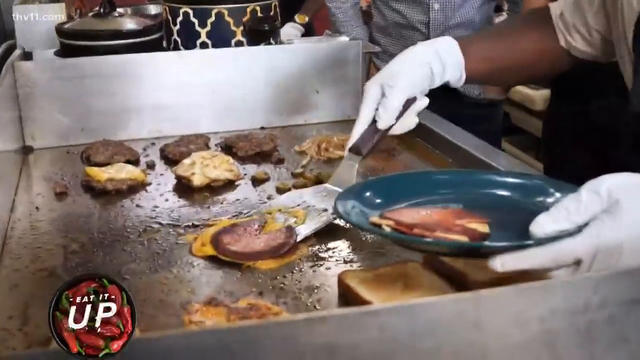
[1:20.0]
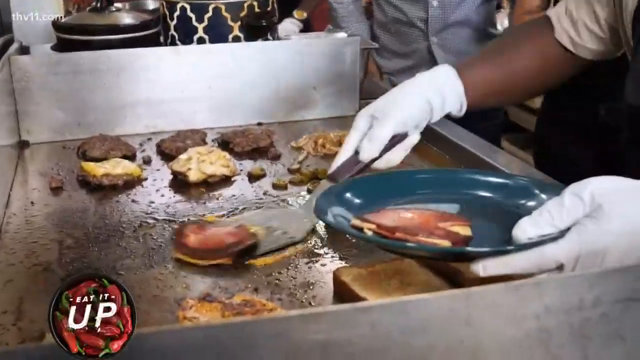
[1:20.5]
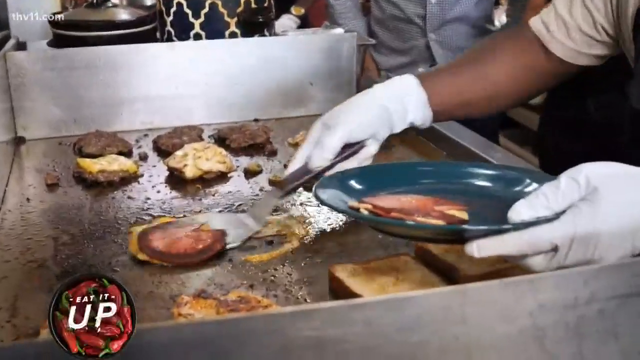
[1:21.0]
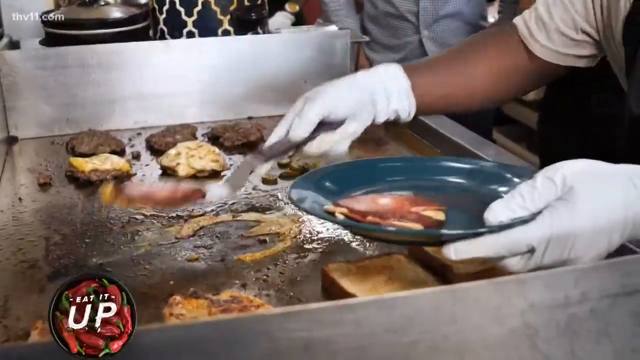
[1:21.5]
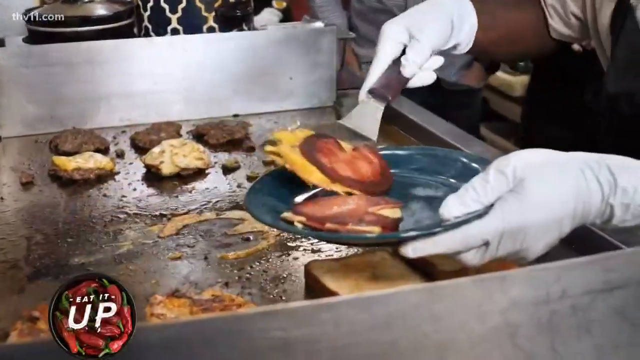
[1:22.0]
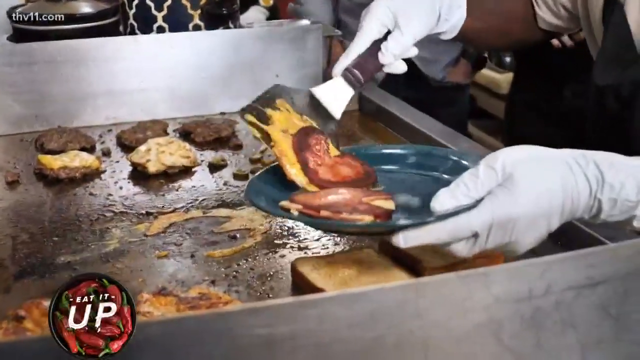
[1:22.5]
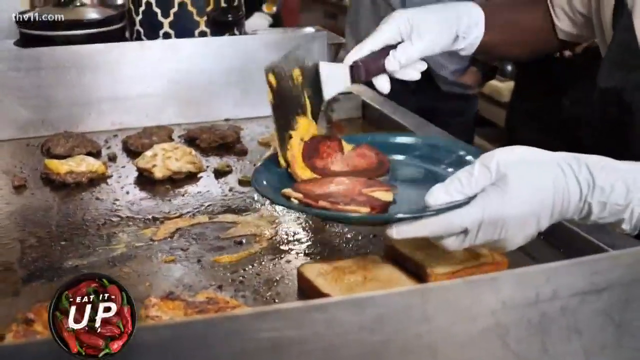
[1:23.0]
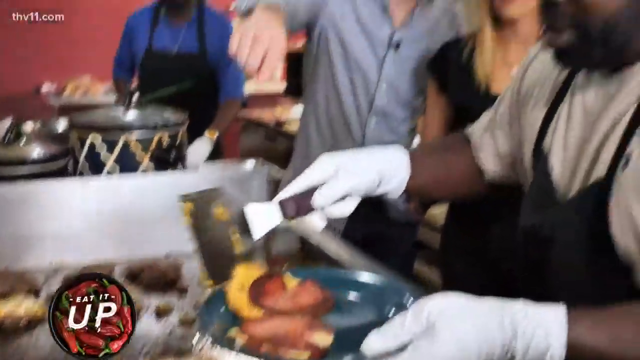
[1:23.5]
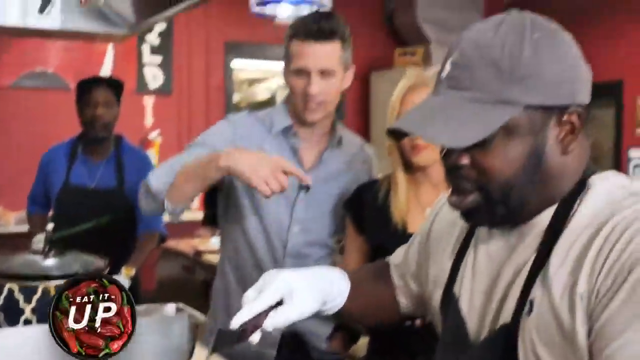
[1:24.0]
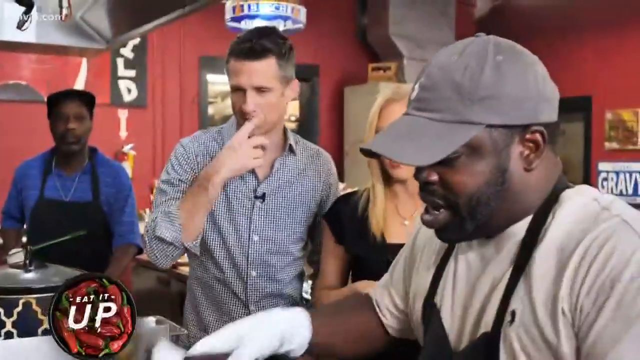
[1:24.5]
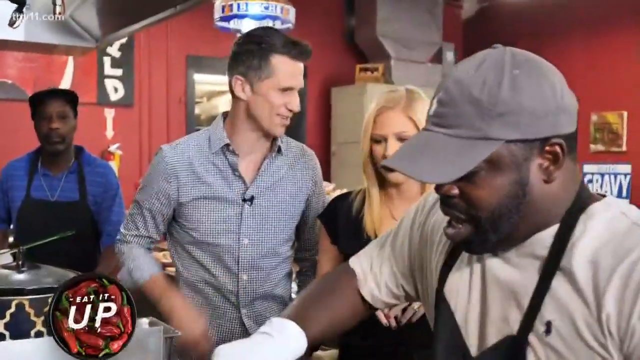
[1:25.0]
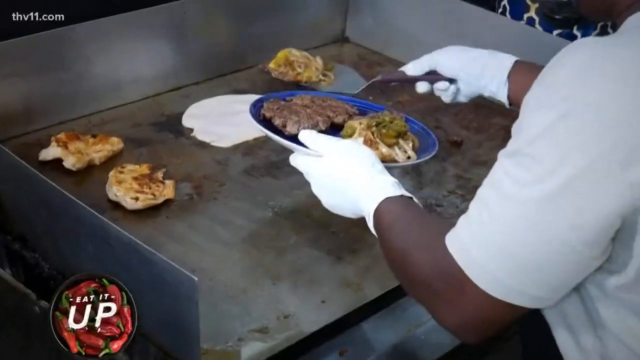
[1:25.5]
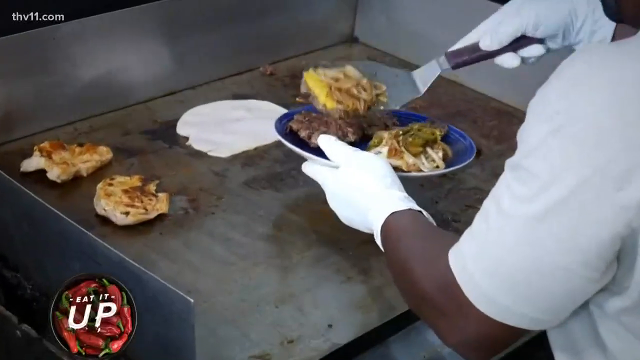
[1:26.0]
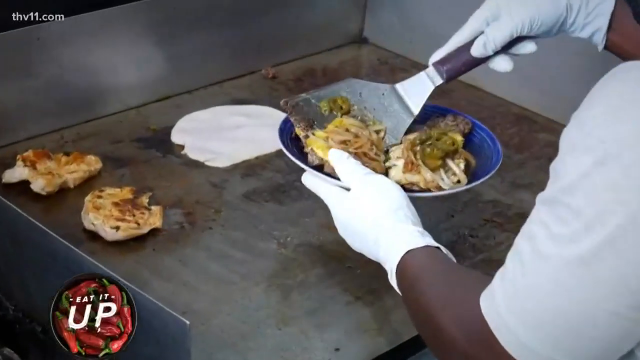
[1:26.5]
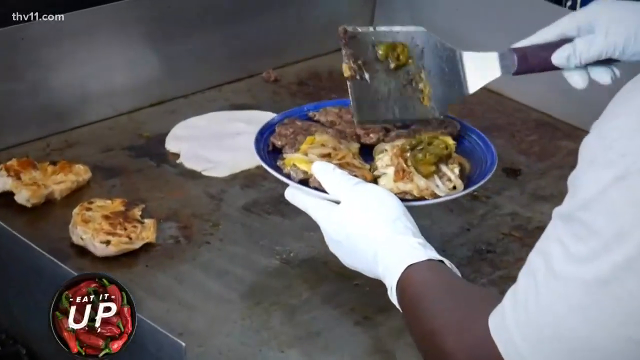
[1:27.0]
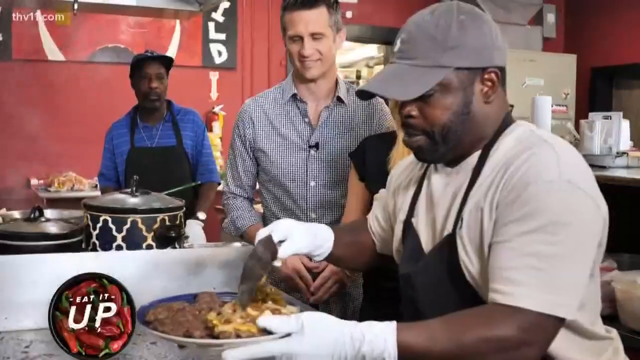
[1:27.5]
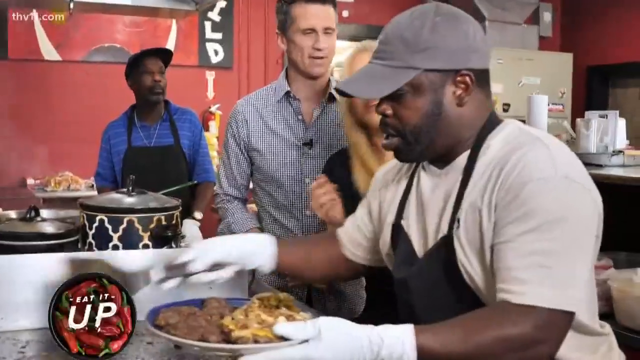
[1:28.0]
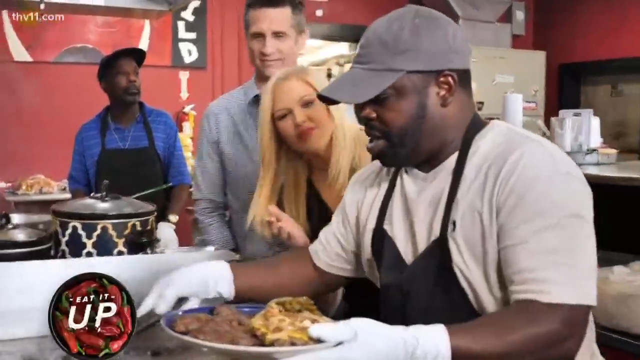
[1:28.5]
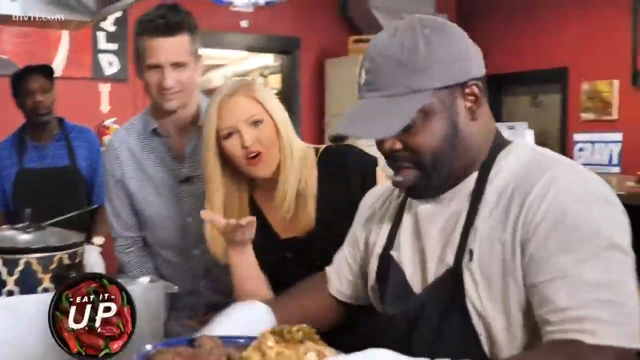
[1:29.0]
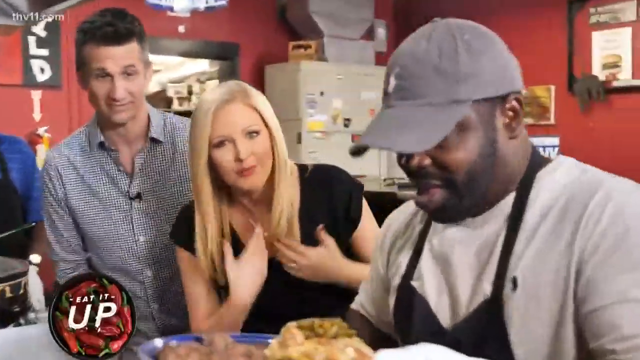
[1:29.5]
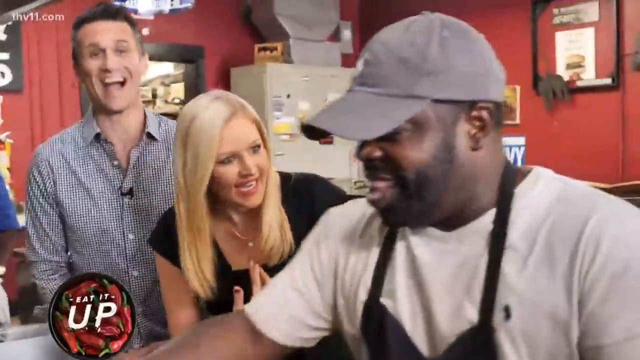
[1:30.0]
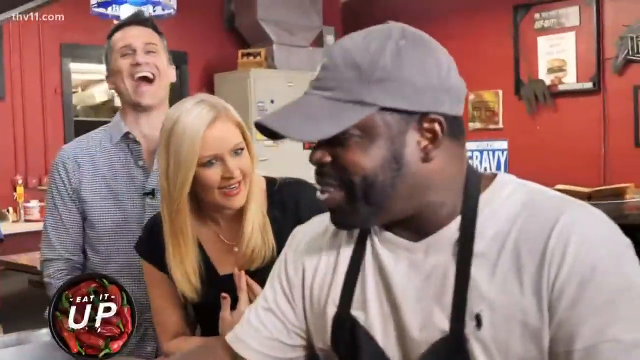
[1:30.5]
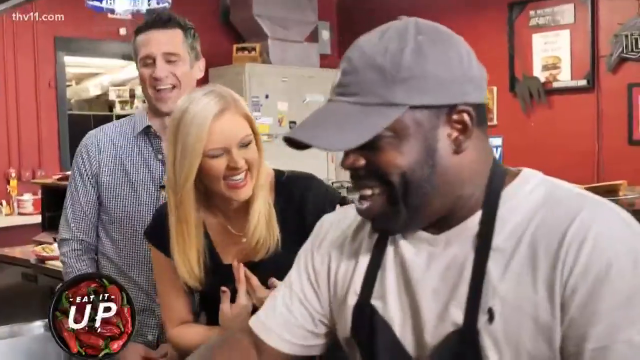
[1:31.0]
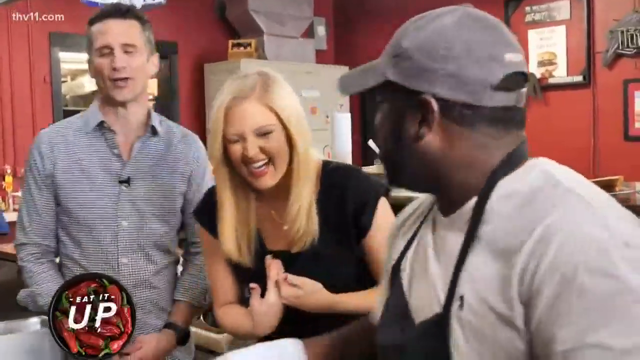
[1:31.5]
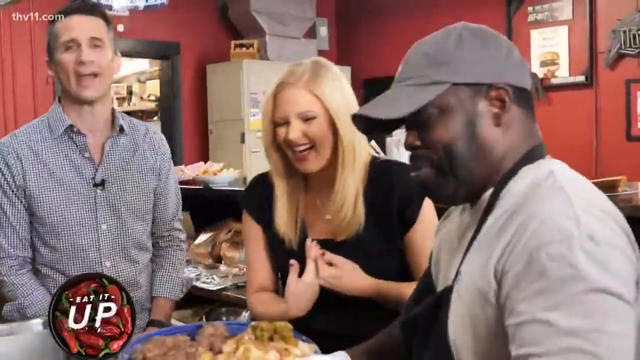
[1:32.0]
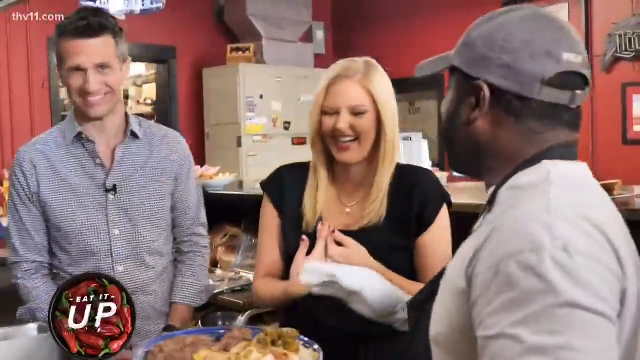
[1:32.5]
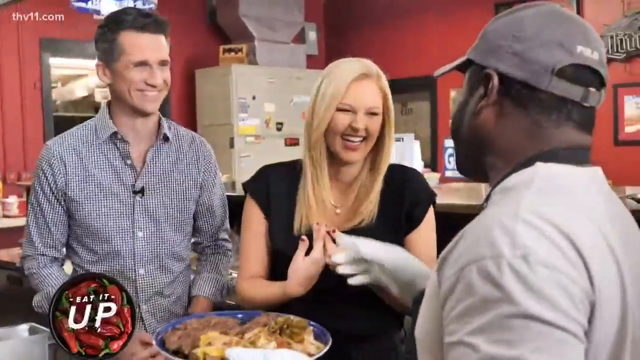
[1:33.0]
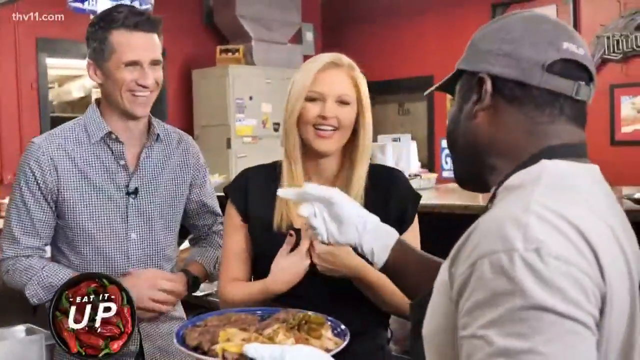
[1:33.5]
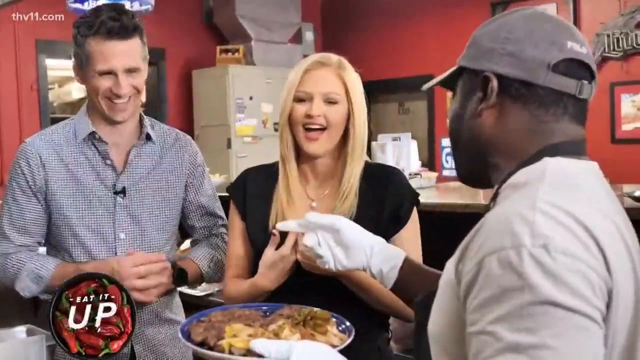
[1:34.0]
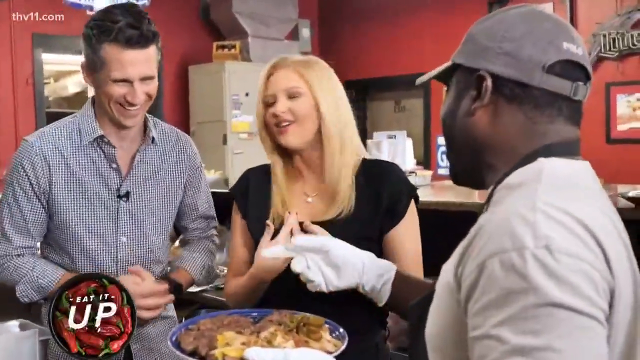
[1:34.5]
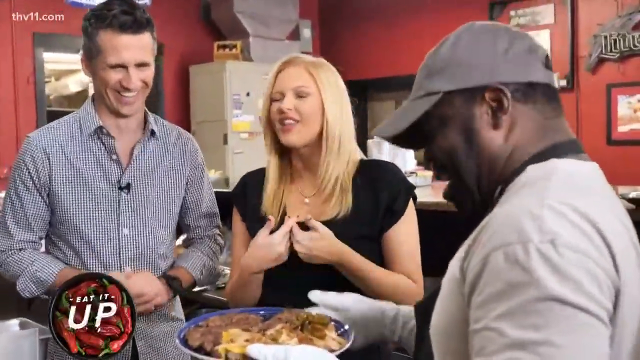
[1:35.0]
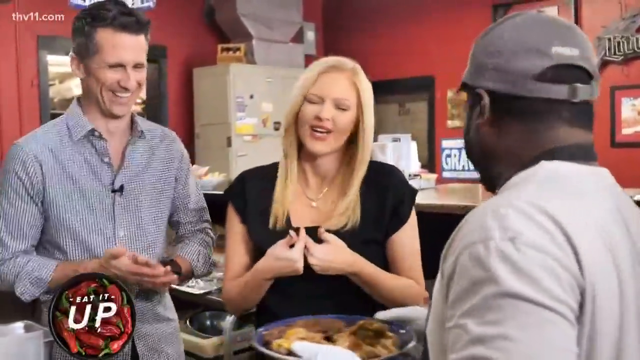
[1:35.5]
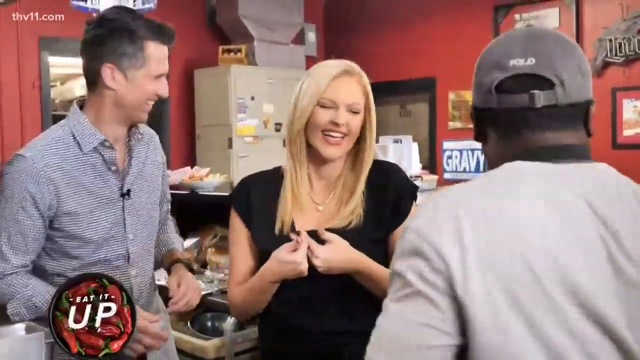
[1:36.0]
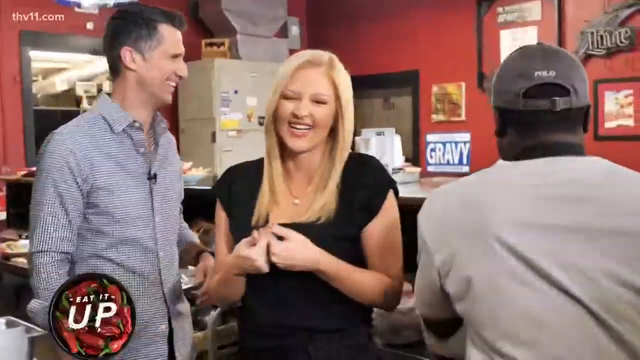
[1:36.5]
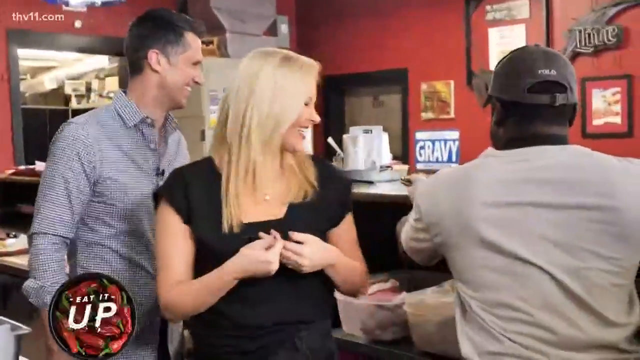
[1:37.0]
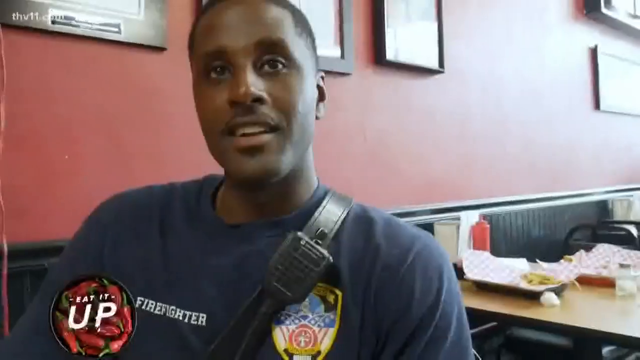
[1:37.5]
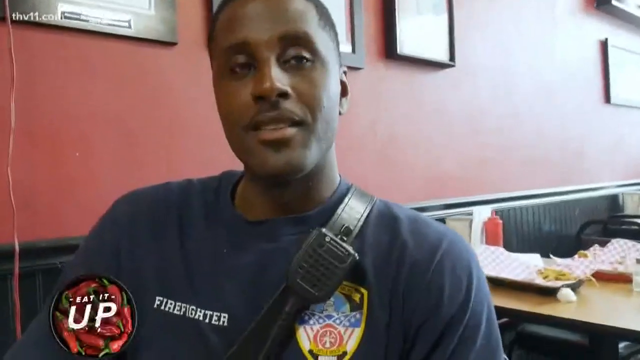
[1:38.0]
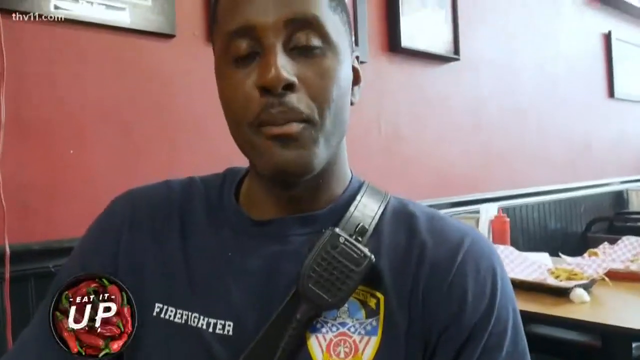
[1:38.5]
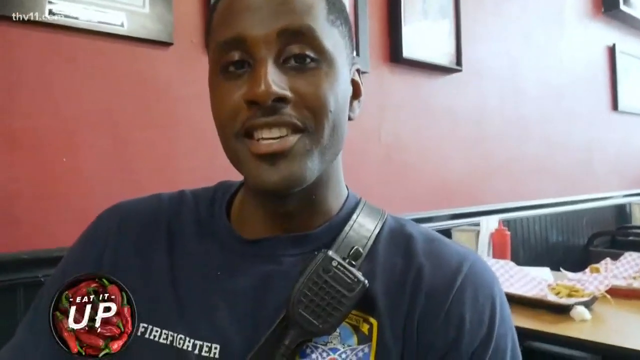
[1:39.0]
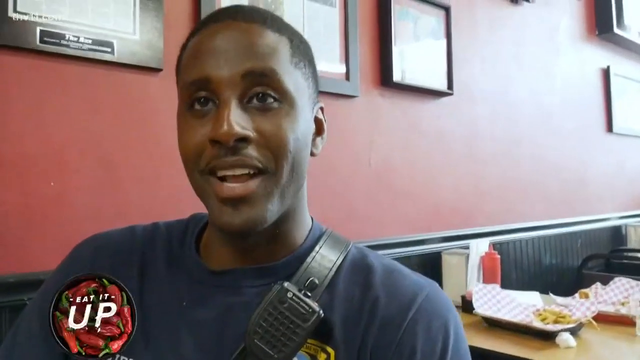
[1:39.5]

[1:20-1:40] The chef takes the burger patties and puts the dish he has made on a plate as the YouTubers talk to him. The other YouTuber, who has long blonde hair and a black top, laughs. The two YouTubers stand next to the chef, who wears white gloves and a gray cap. It looks like she asks whether the food is for her, and the chef laughs; the YouTubers laugh as well. The cook explains to them how he cooked the food, and the YouTubers appear ready to taste it. He puts the food on a blue plate, holding the plates with his white-gloved hands.